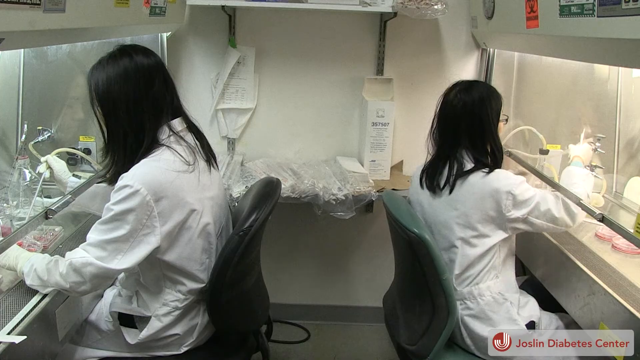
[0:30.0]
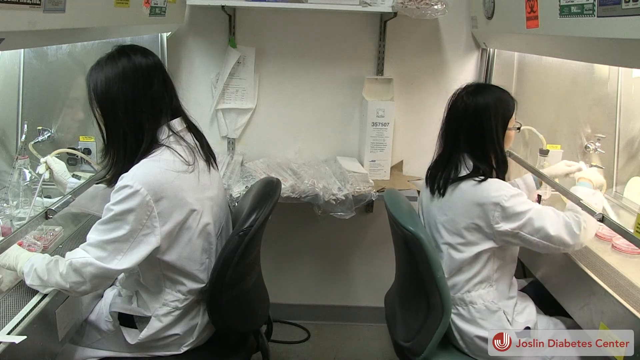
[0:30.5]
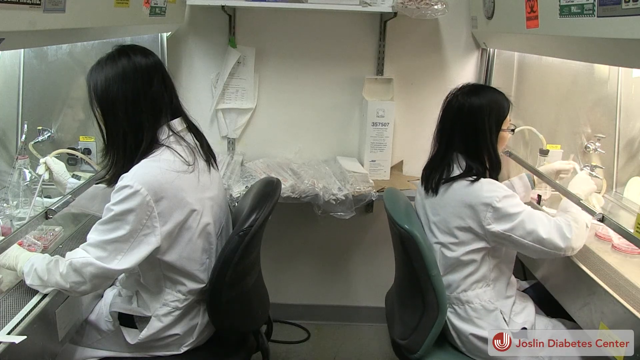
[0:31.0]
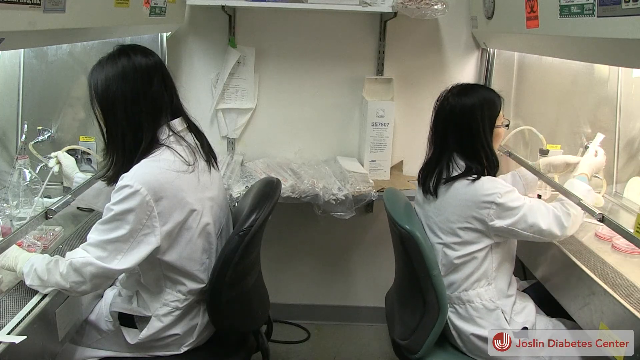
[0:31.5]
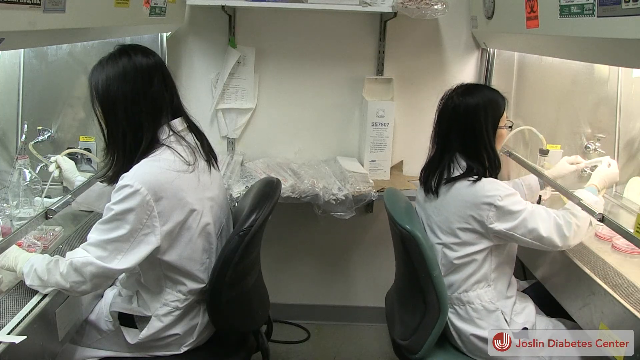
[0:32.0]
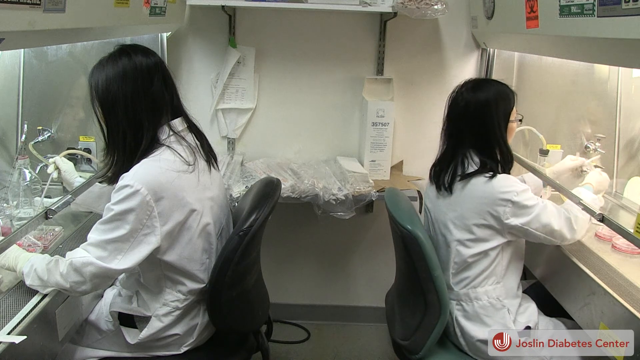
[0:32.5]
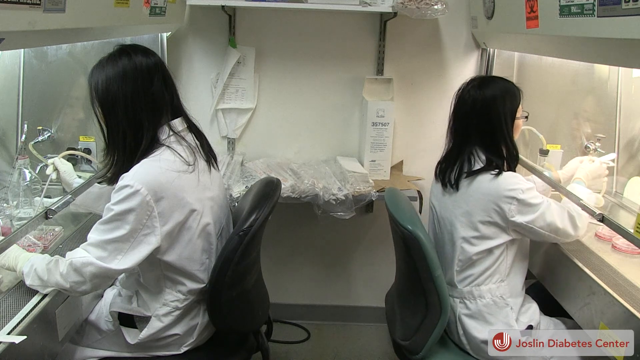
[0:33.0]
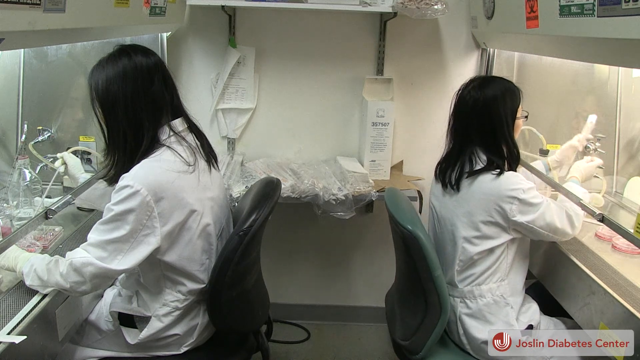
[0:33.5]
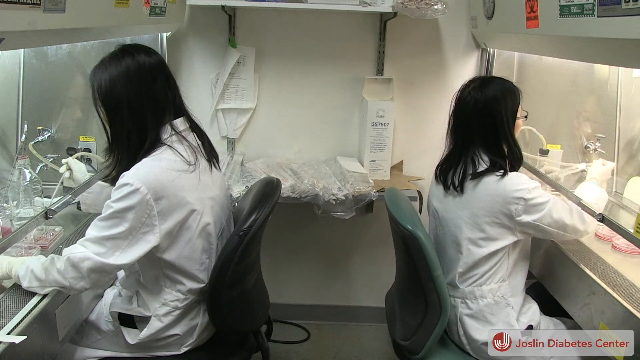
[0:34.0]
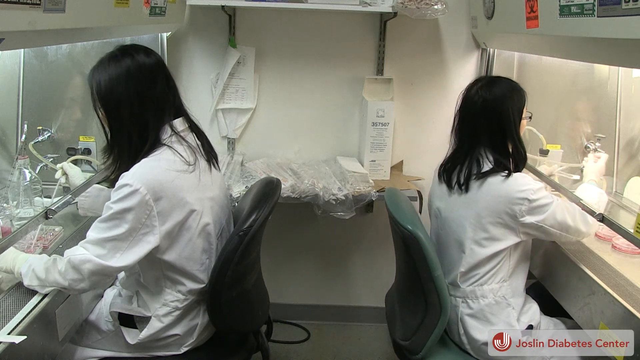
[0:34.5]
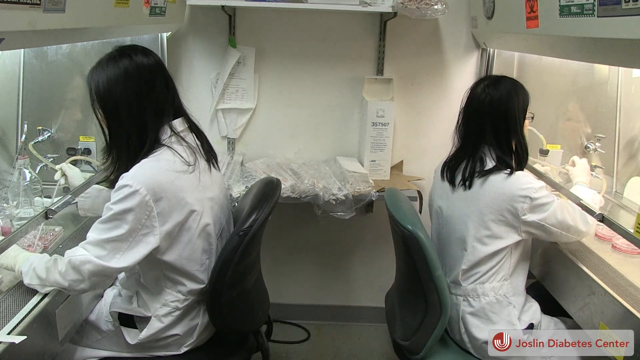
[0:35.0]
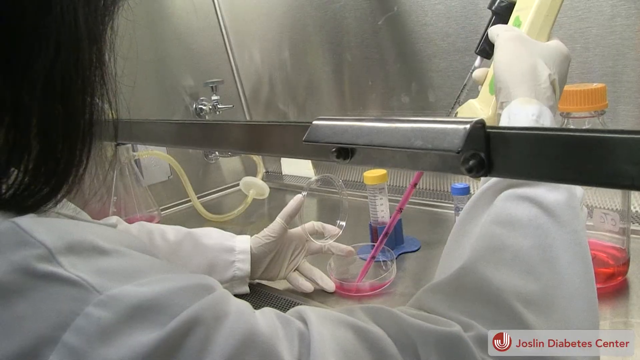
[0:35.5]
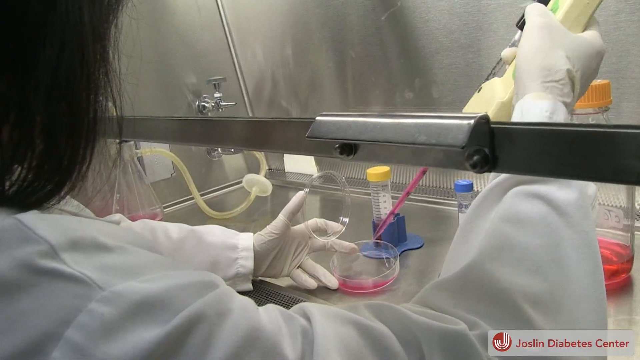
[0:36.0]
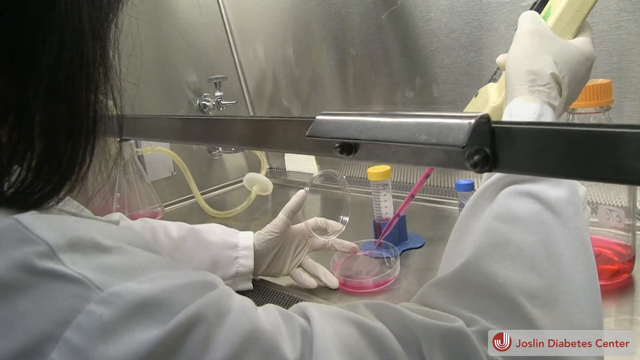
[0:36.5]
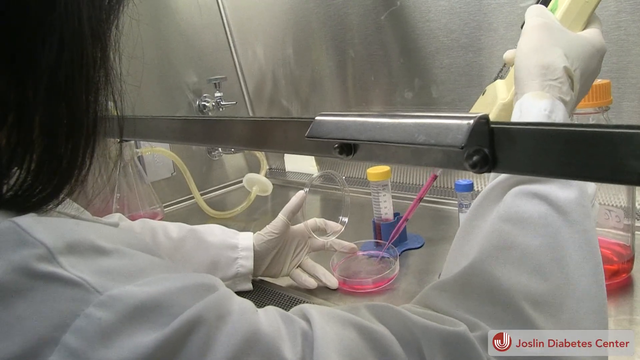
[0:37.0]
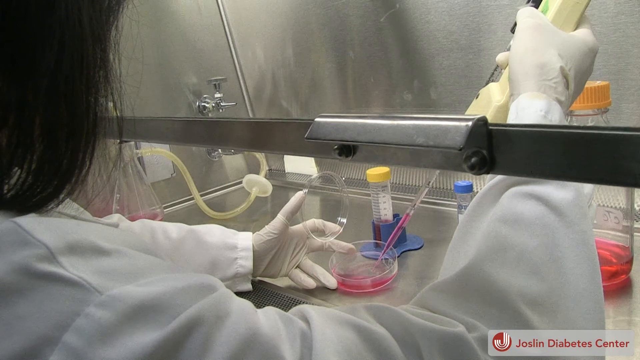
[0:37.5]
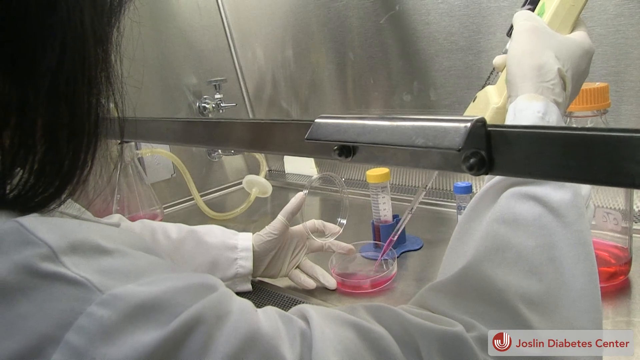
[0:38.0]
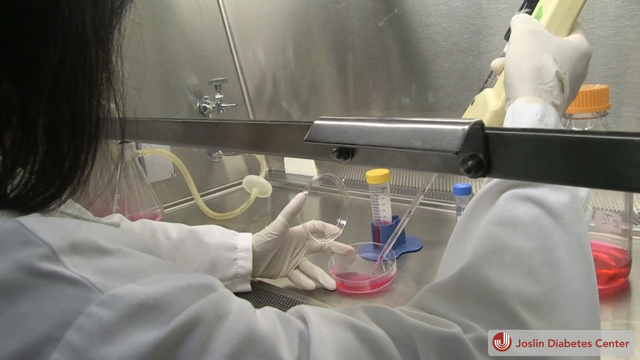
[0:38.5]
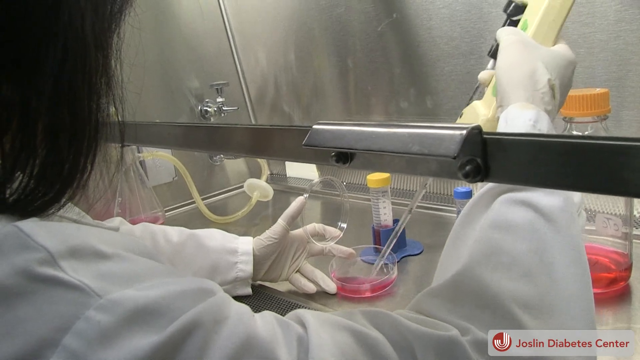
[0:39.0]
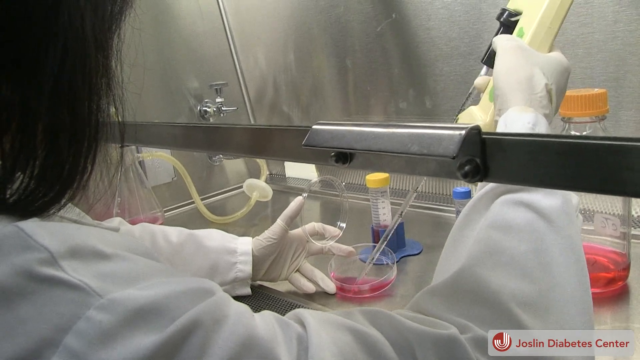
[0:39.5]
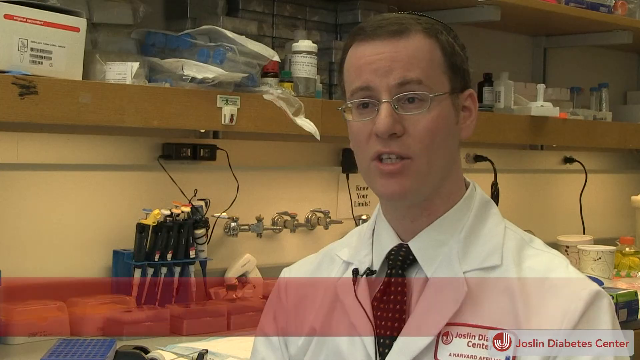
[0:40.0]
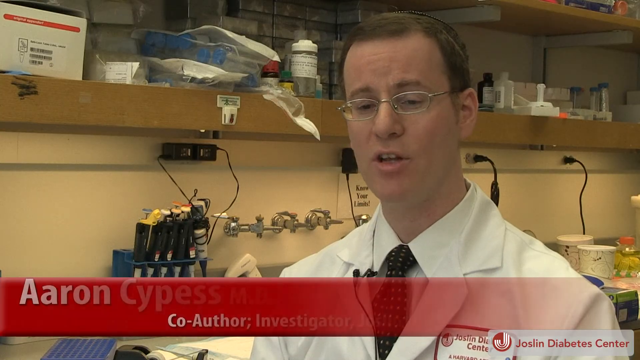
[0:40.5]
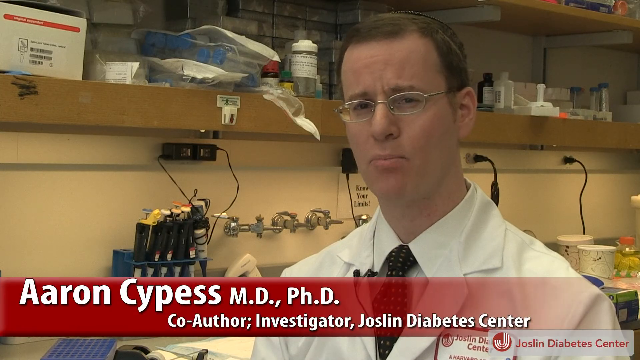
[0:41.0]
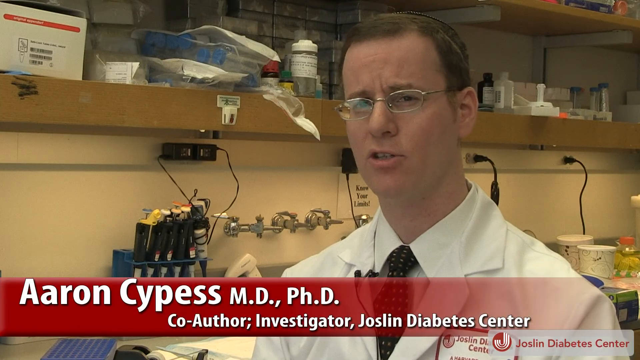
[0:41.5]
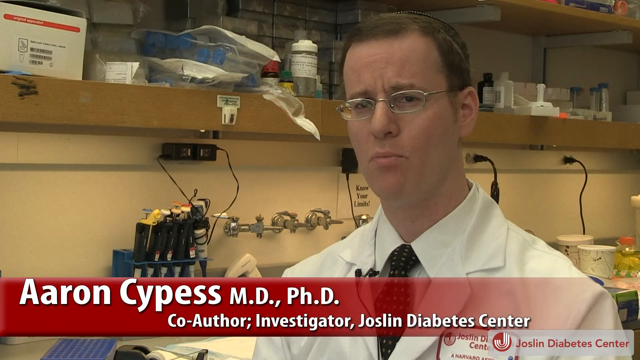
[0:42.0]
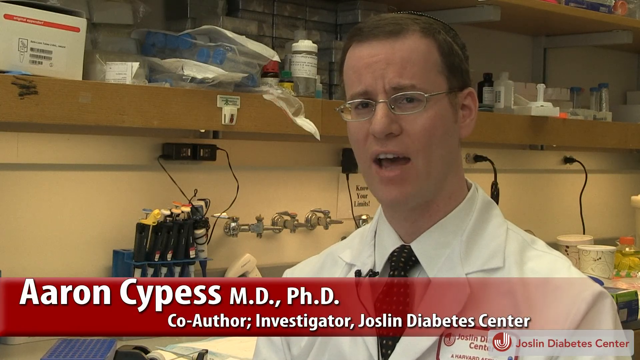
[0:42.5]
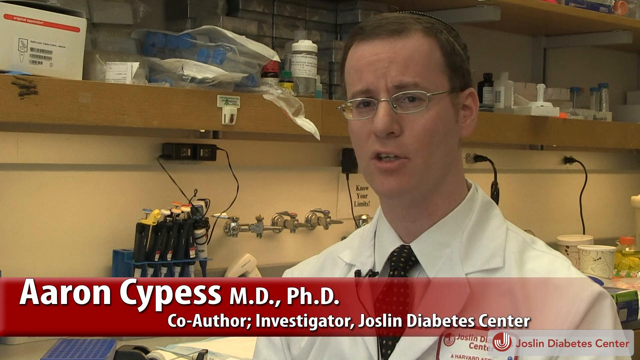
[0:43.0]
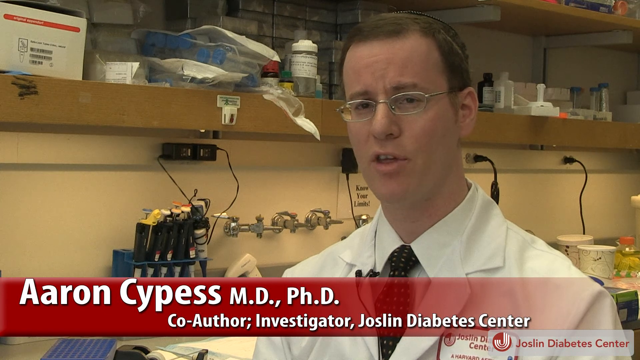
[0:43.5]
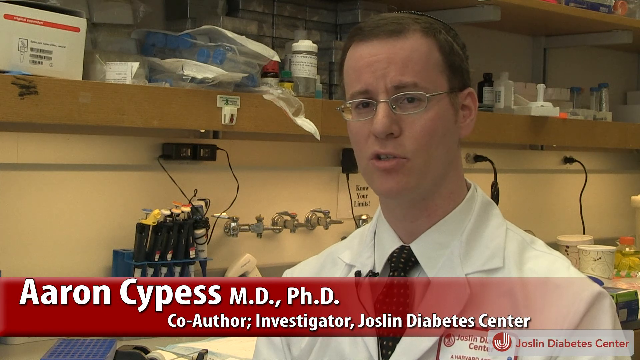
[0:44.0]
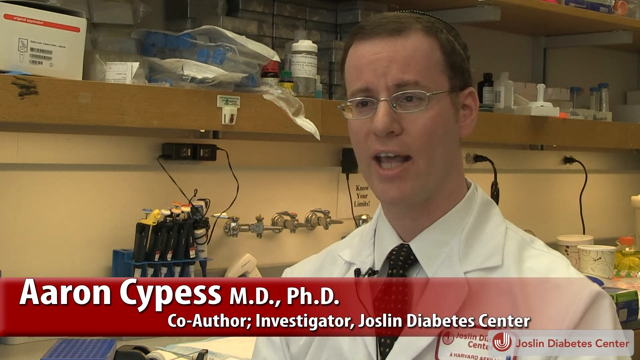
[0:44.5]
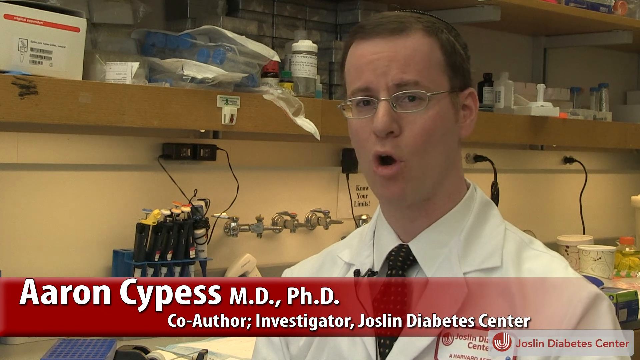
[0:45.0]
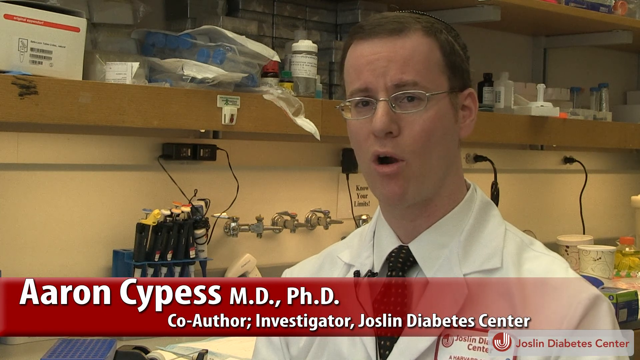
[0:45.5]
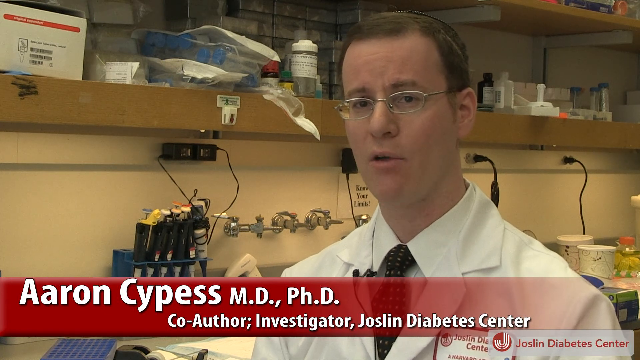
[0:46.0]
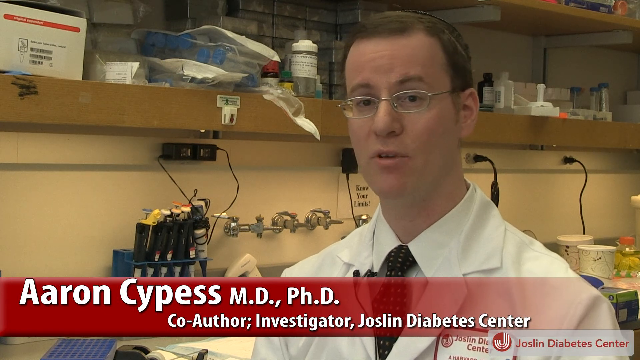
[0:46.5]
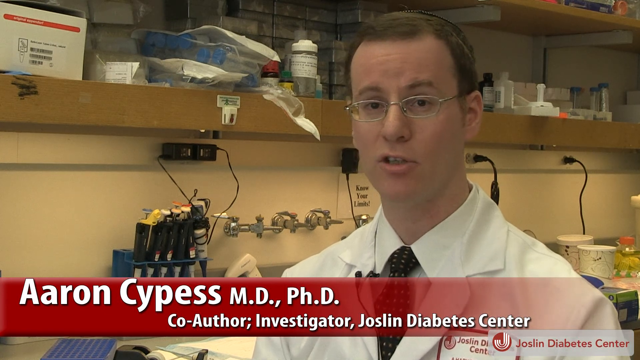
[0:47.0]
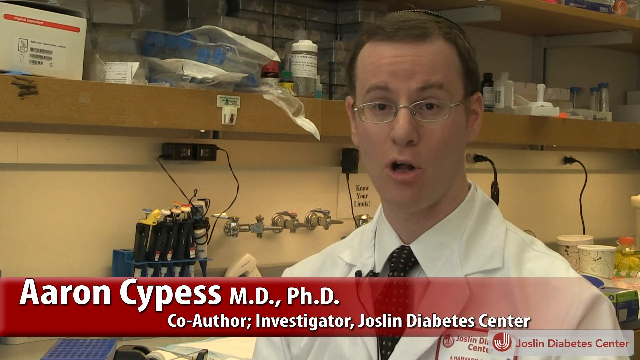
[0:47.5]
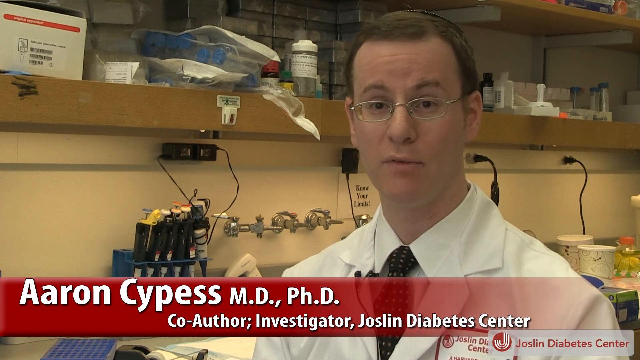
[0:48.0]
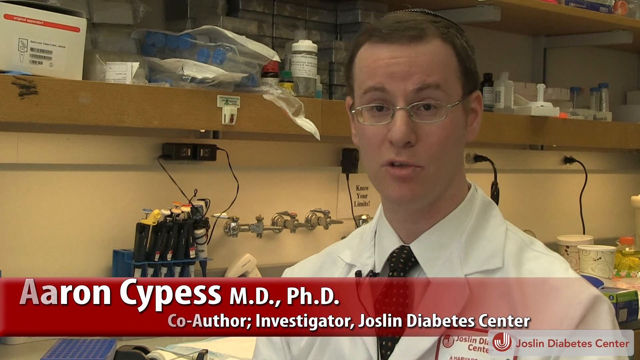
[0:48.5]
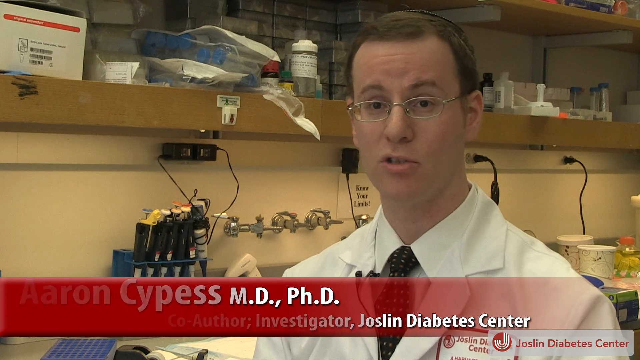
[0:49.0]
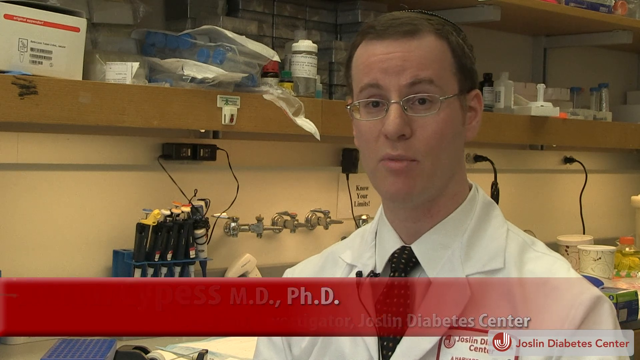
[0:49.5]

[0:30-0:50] Two workers in white lab coats work with materials inside a contamination-protected zone in a lab. Both scientists wear white gloves and have long, untied black hair. The scientist on the left appears to be holding a long syringe in her right hand, while the scientist on the right opens some packaging from a sterile blister pack and then uses it in her work. The camera zooms in on one of the workers, who supports a Petri dish with her left hand while injecting a pink liquid into it from a syringe held in her right hand. The video then cuts to an interview with Aaron Cypess, M.D, Ph.D, also a co-author and investigator at the Joslin Diabetes Center. He wears a white lab coat, a collared shirt with a tie, and glasses, and appears to be in a lab testing environment.